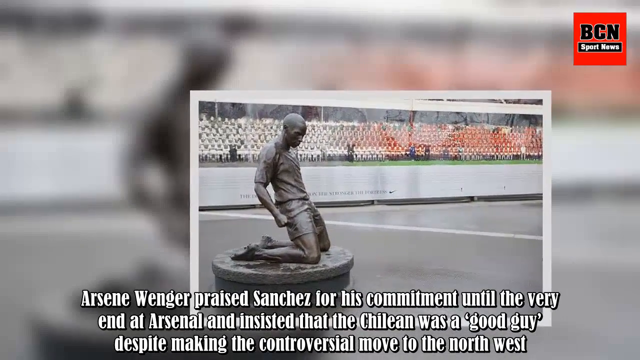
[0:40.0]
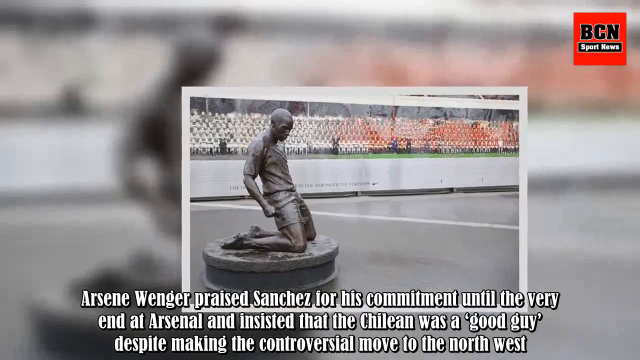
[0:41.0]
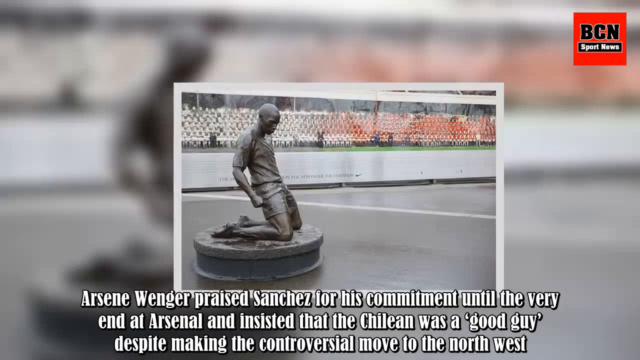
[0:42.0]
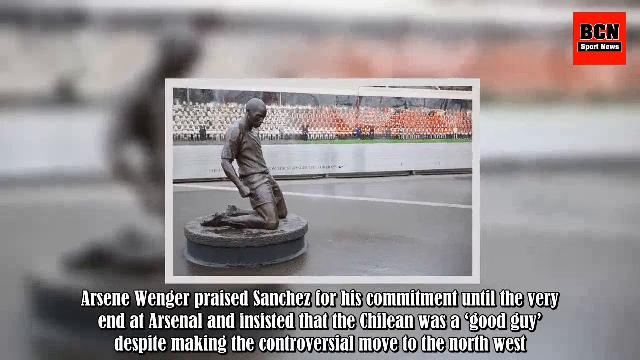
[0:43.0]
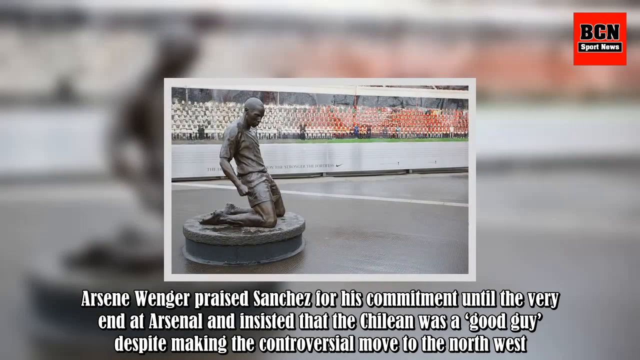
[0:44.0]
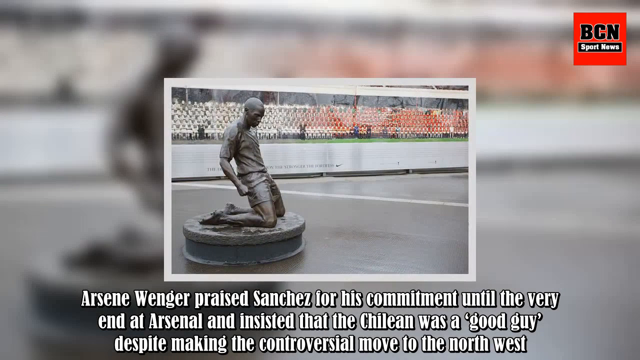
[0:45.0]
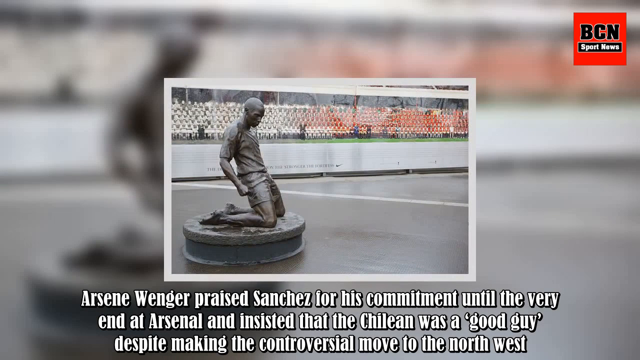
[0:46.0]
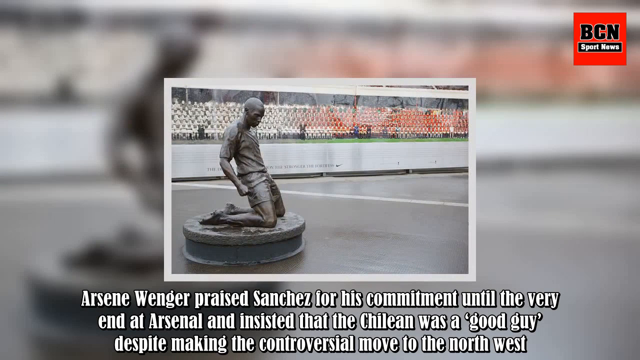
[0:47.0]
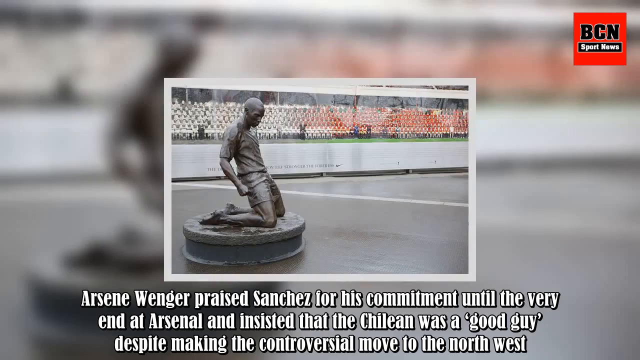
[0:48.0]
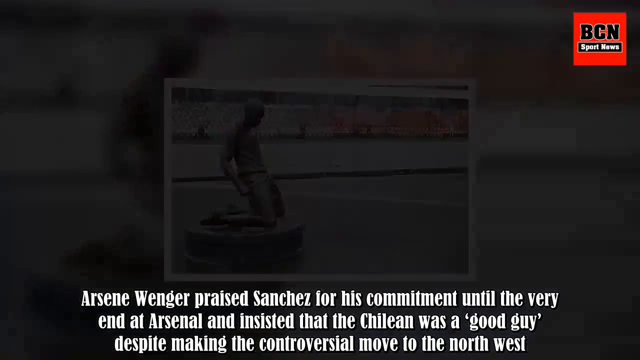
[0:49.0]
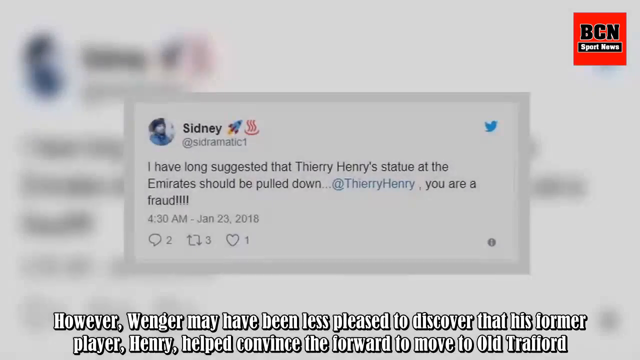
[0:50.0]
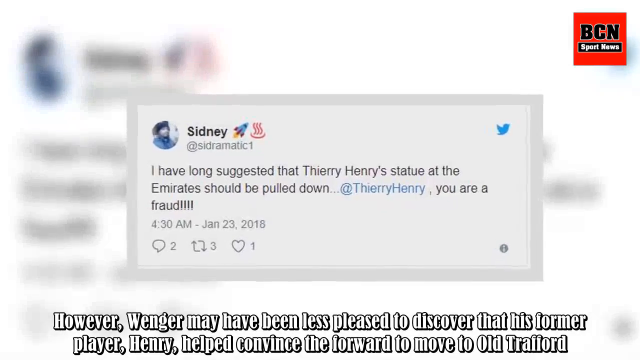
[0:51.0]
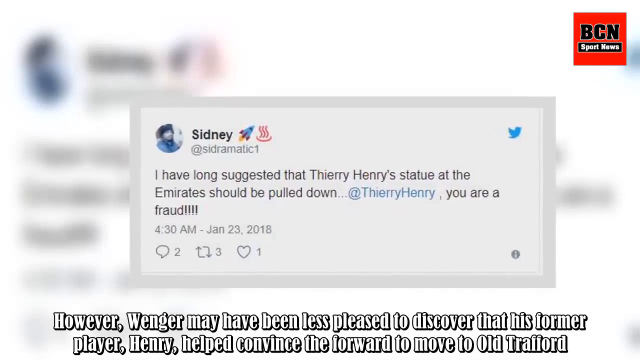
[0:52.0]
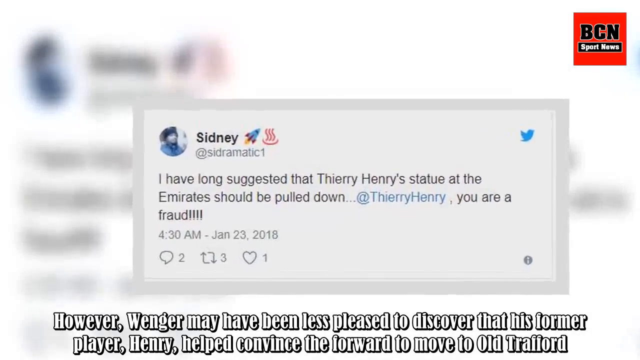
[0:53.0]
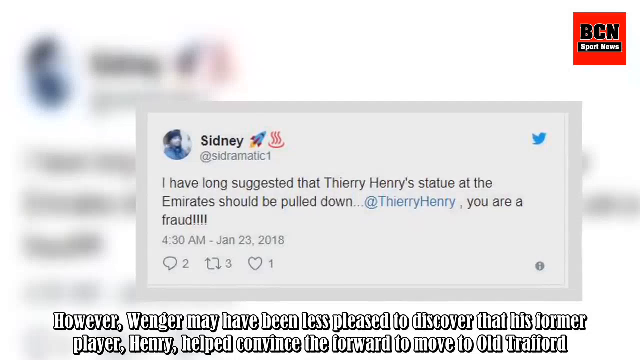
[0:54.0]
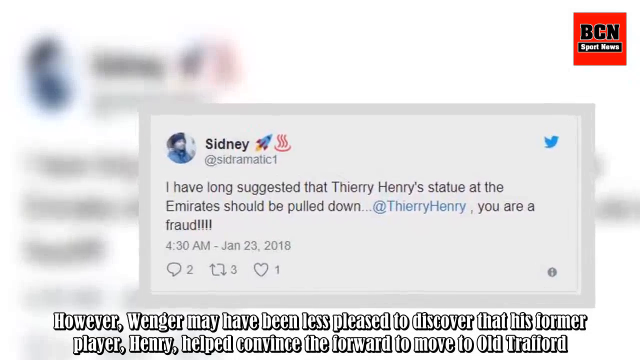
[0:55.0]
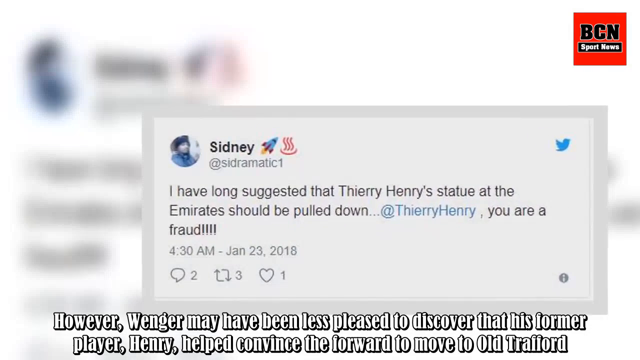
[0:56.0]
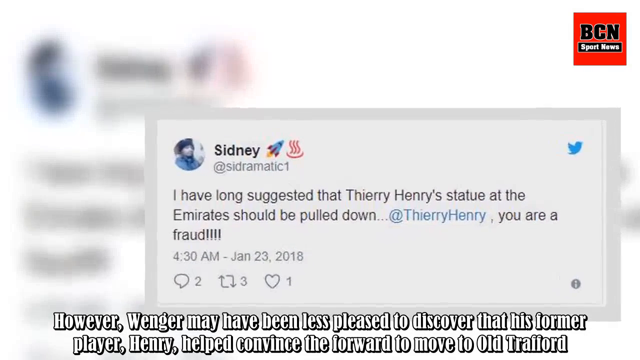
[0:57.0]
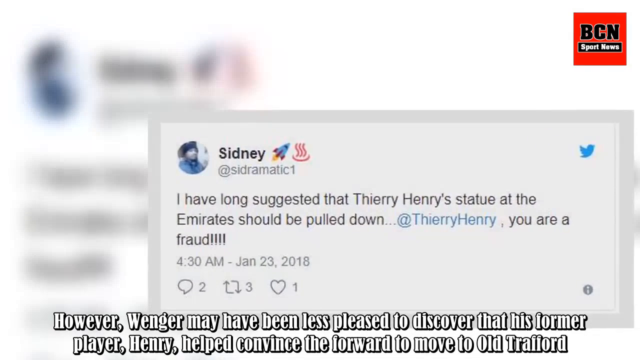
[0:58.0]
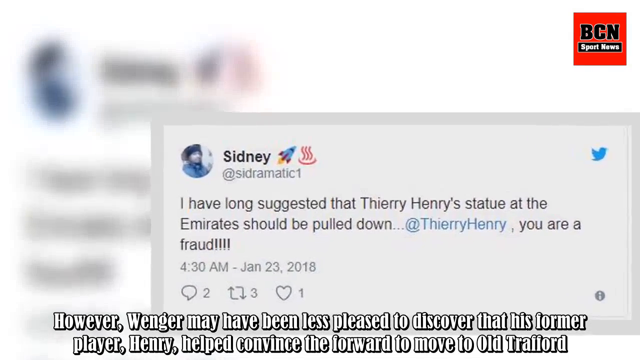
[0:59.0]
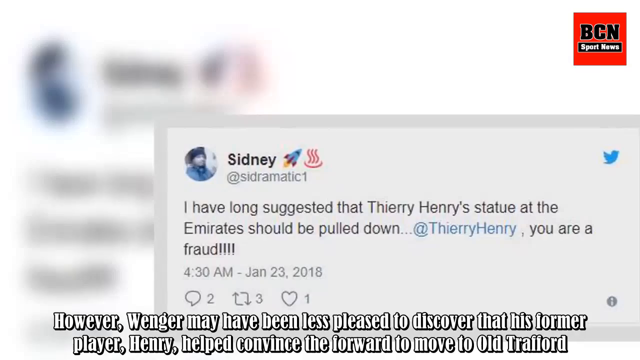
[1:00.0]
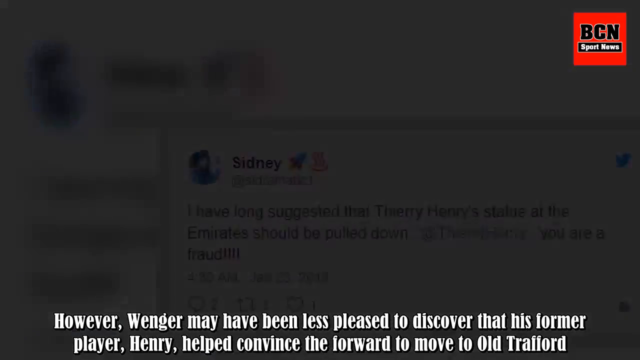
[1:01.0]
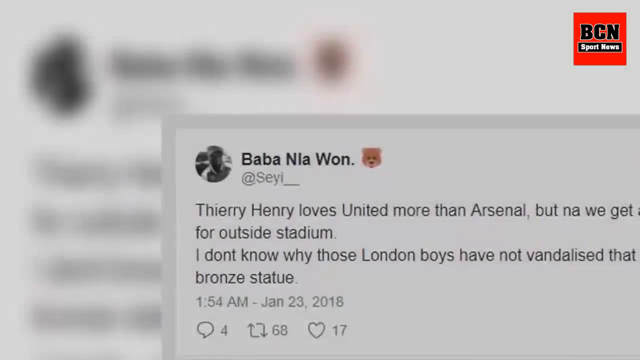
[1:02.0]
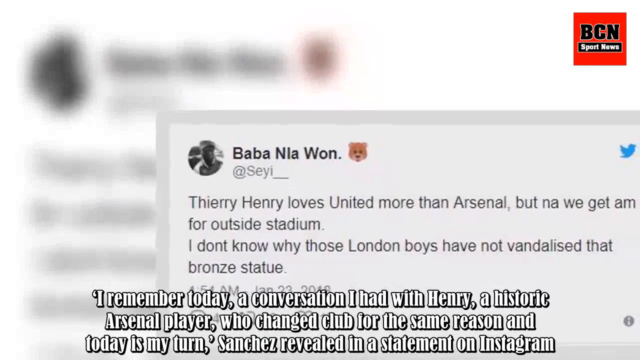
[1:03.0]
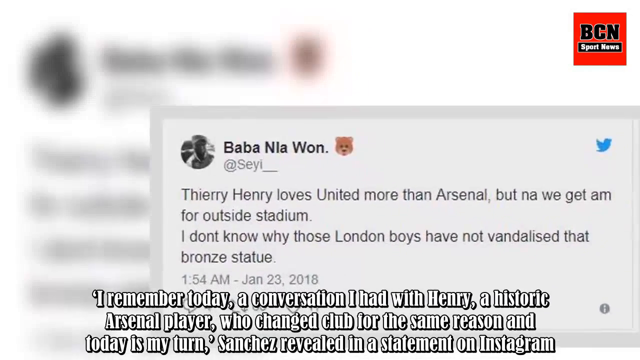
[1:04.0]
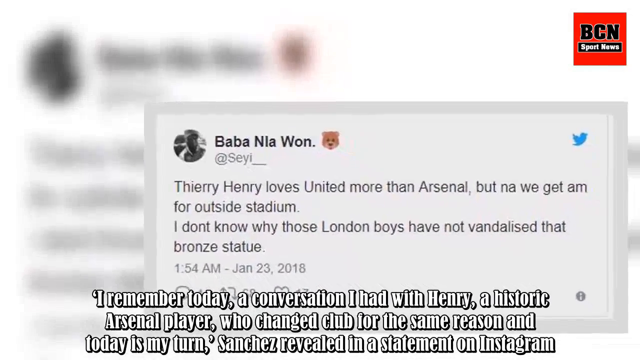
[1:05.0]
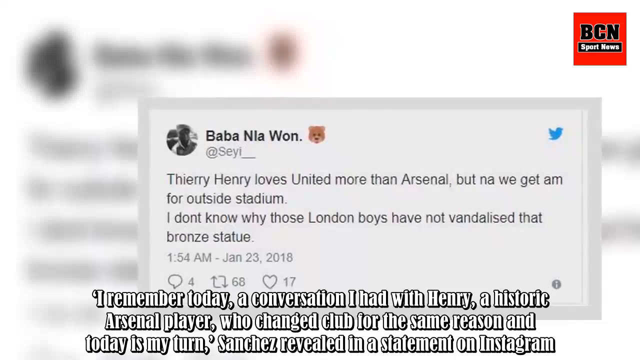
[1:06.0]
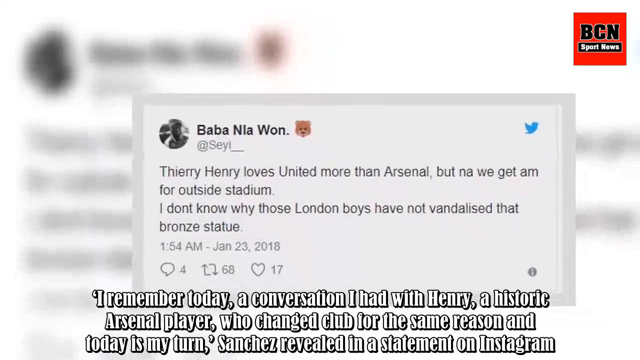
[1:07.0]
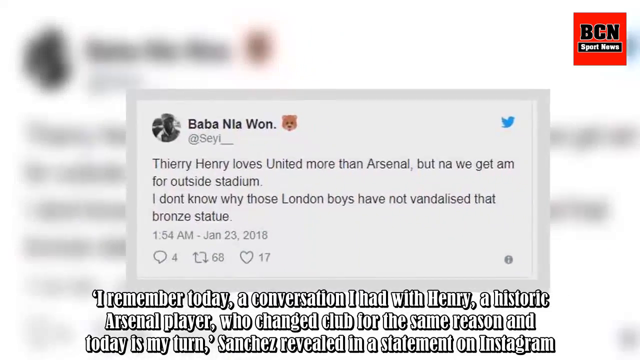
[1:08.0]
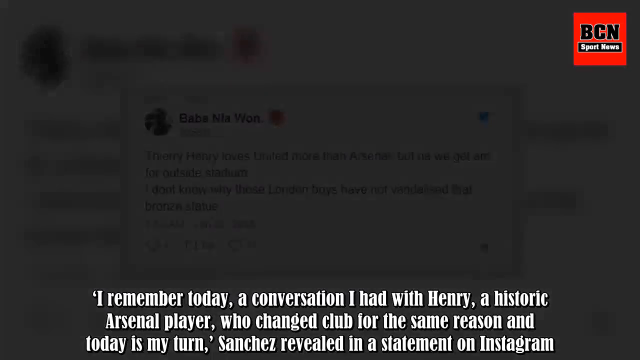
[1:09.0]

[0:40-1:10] Tweets from social media appear on the screen. One says "I have long suggested that Thierry Henry's statue", and another says "Thierry Henry loves the United more than Arsenal". The tweets are about a statue.